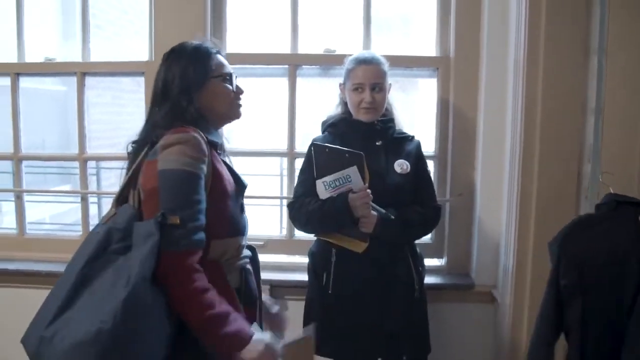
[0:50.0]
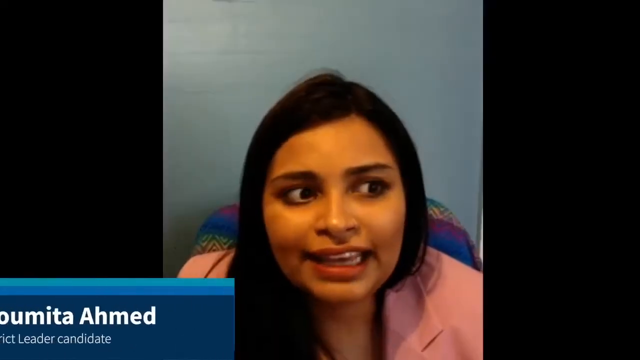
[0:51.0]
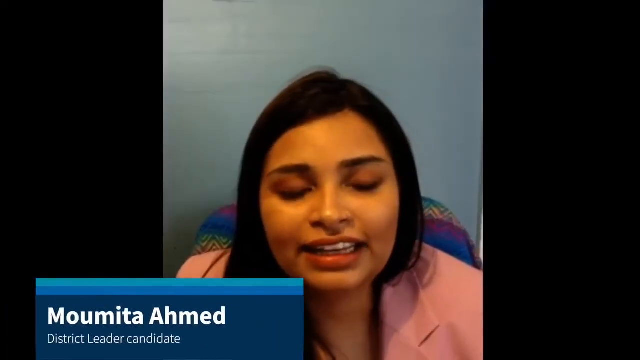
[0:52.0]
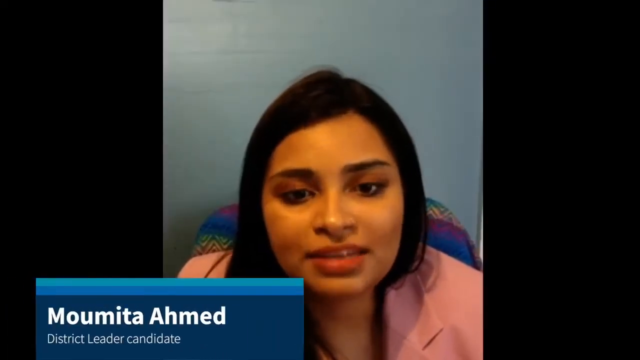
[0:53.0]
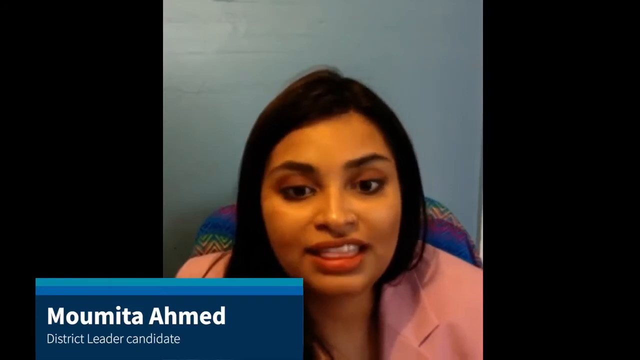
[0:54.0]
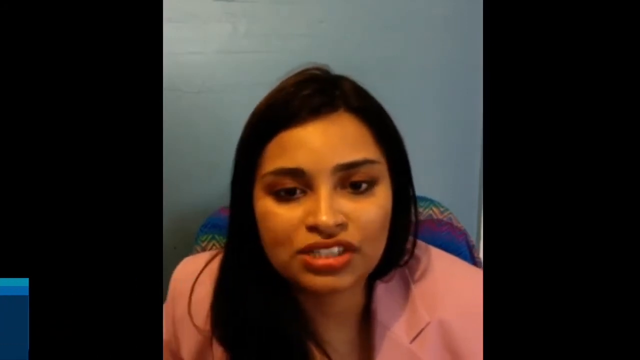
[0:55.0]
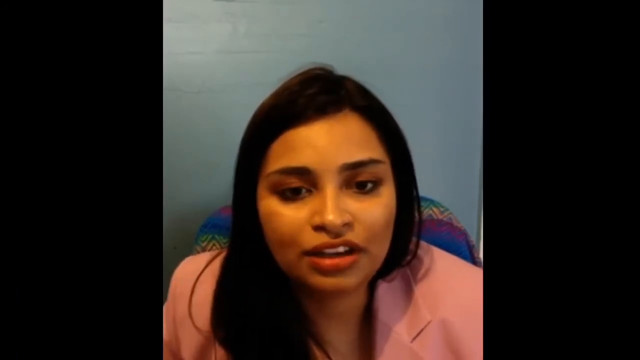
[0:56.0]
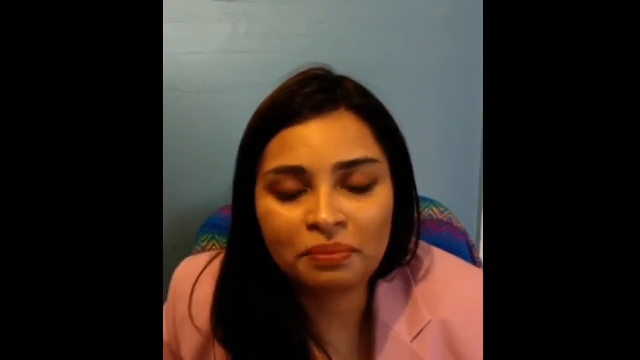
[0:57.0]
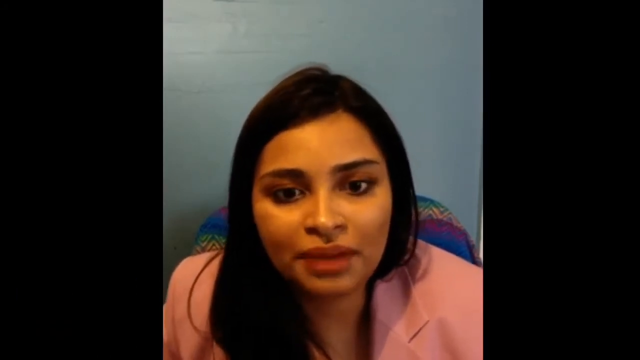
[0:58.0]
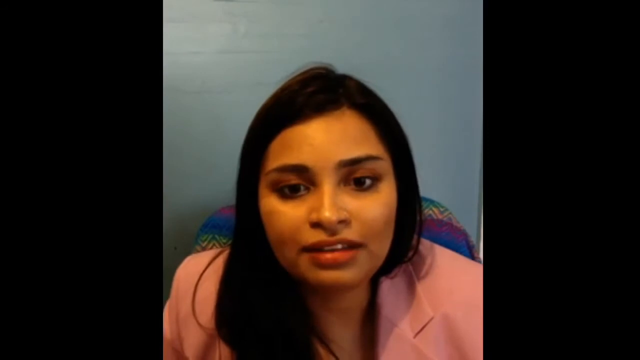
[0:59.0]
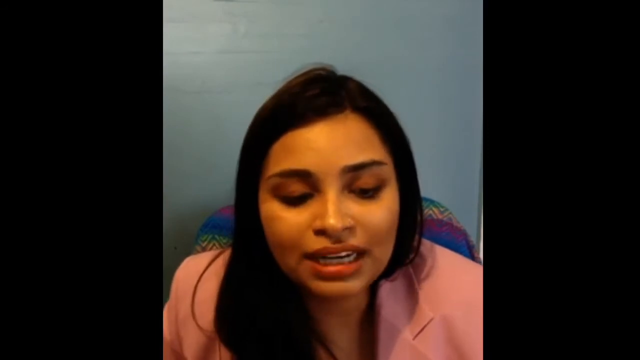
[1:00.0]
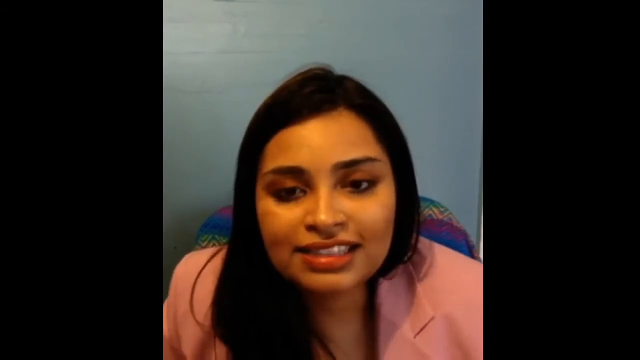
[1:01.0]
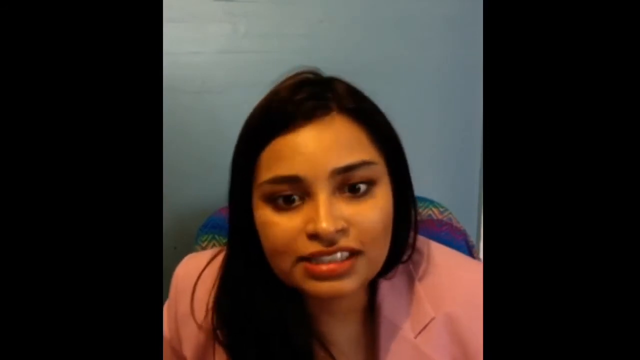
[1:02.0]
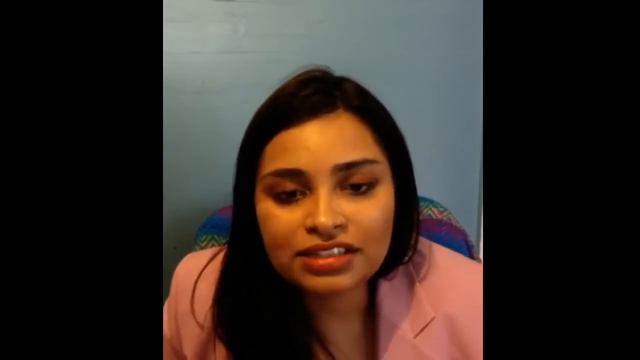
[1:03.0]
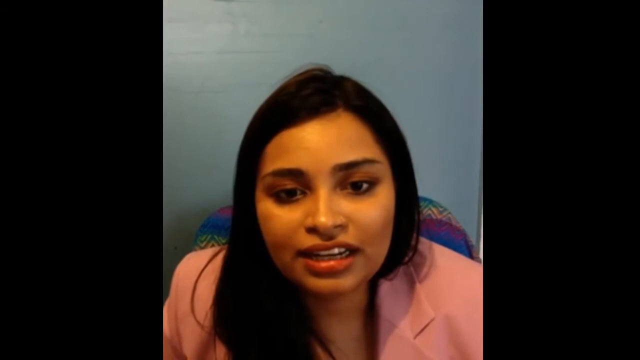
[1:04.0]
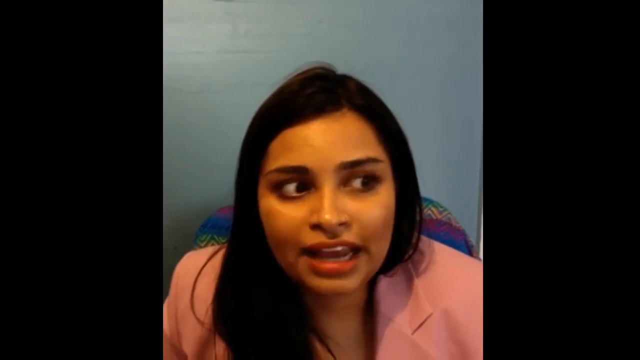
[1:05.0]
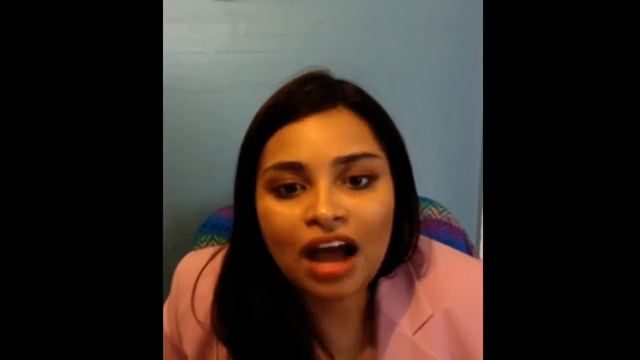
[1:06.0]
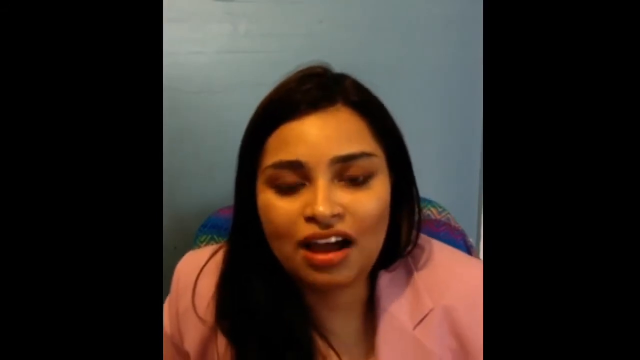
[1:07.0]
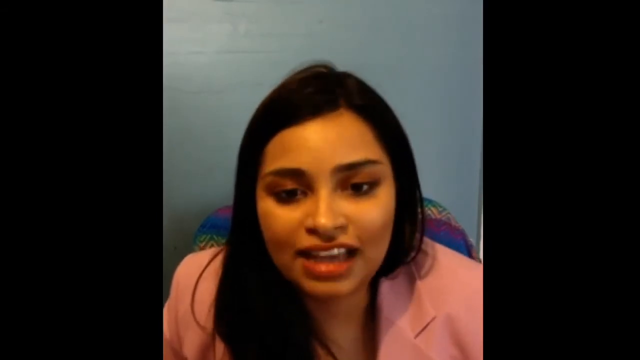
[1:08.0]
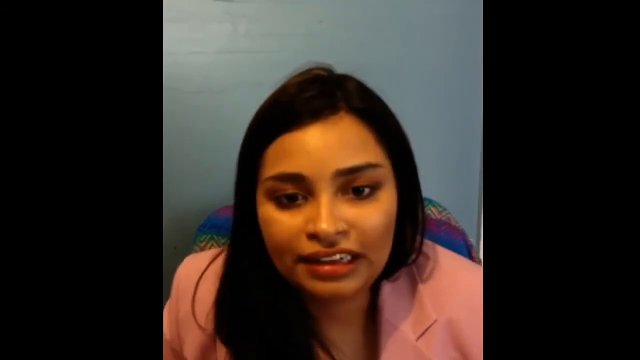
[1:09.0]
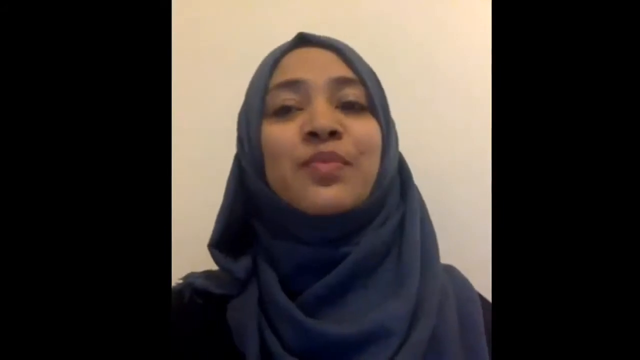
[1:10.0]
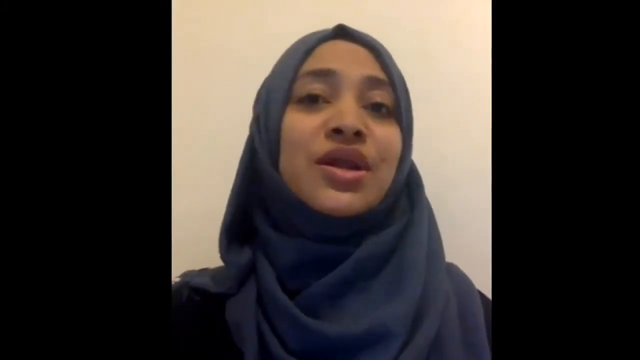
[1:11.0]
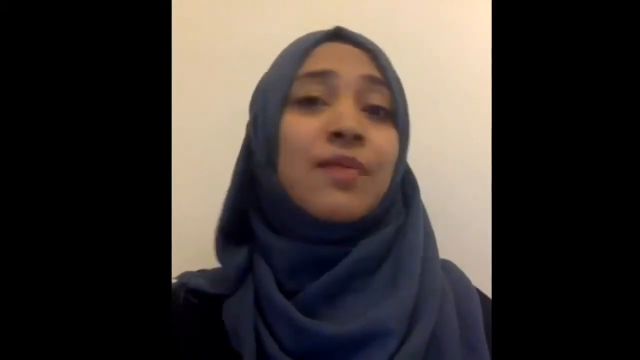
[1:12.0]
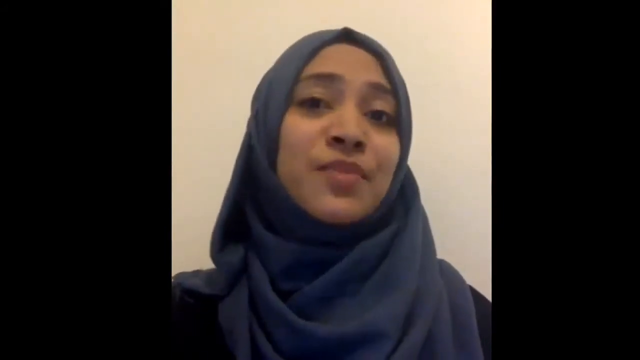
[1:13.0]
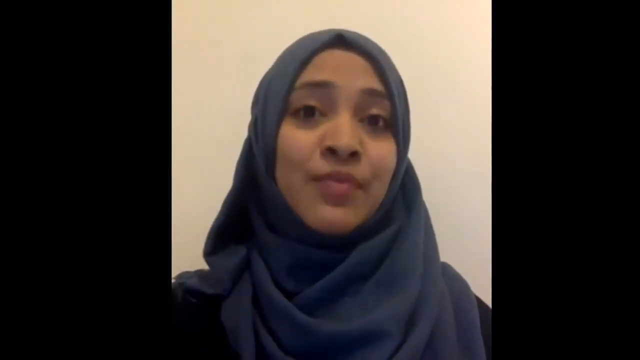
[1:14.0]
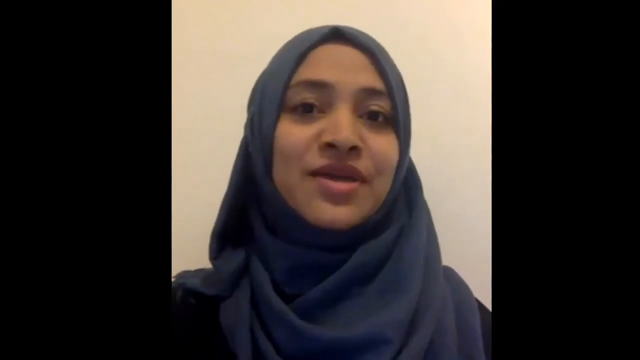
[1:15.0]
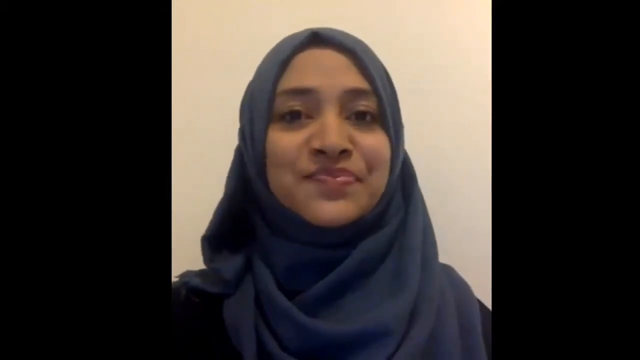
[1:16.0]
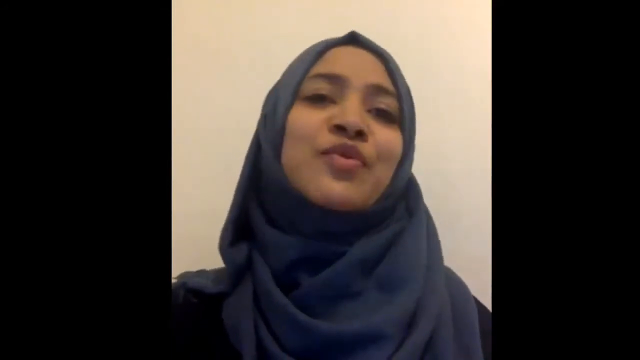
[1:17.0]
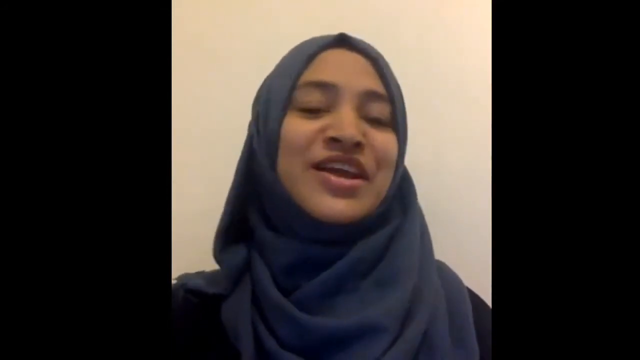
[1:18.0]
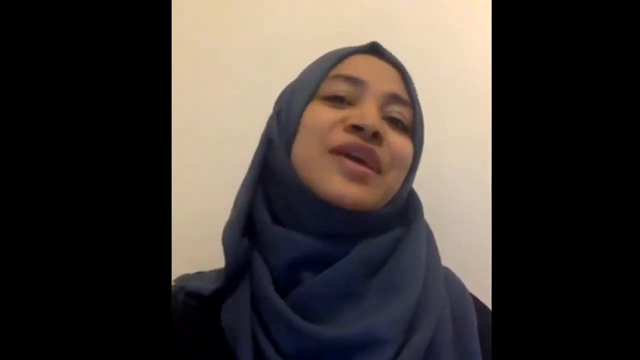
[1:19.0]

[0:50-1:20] Momita Ahmed, the district leader, looks somewhat furious as she explains herself to the media outside. Afterwards, Mary is also shown giving her own side of the story.